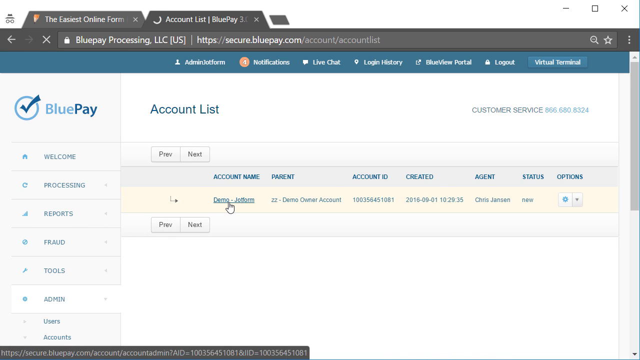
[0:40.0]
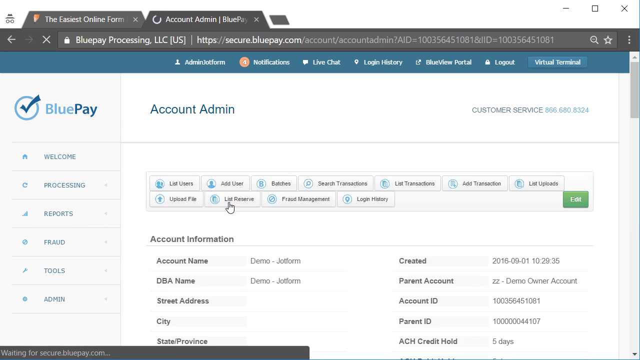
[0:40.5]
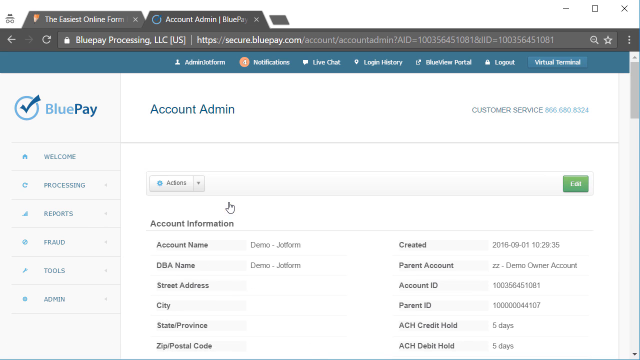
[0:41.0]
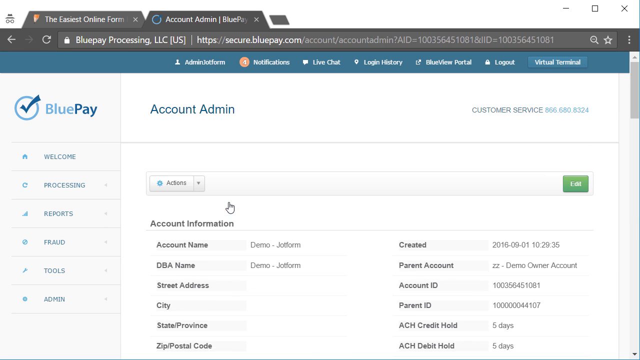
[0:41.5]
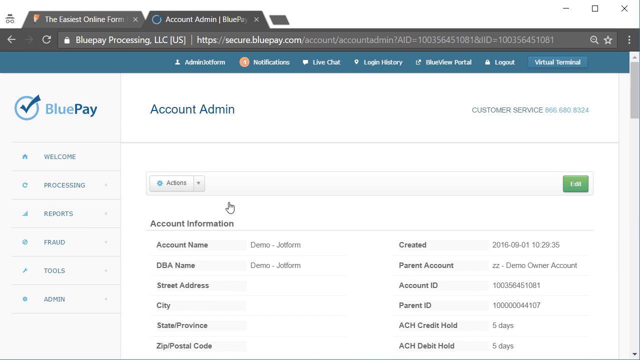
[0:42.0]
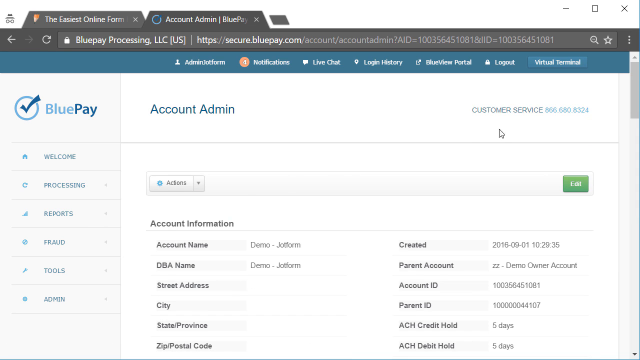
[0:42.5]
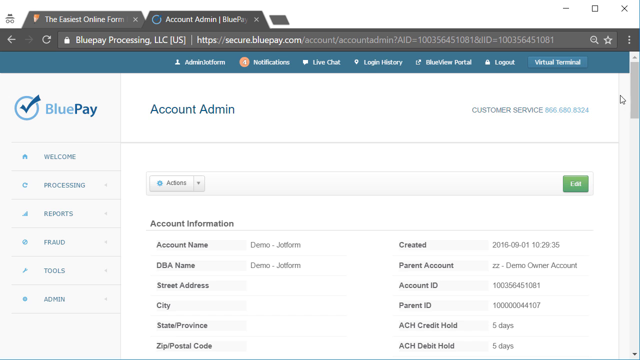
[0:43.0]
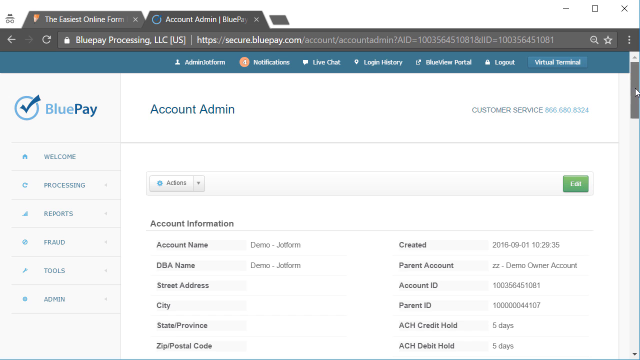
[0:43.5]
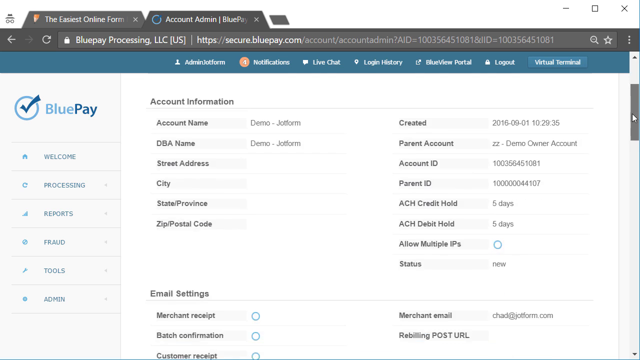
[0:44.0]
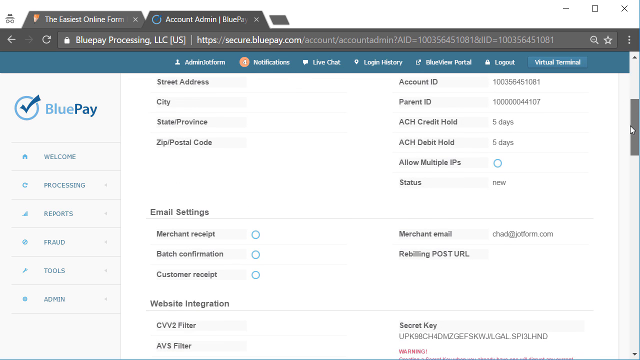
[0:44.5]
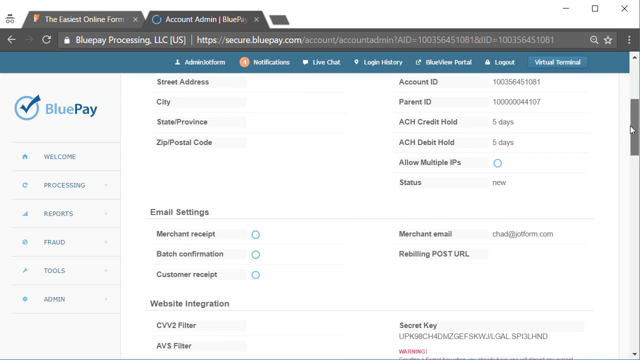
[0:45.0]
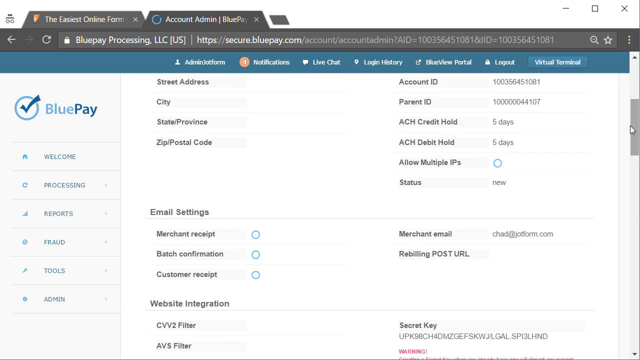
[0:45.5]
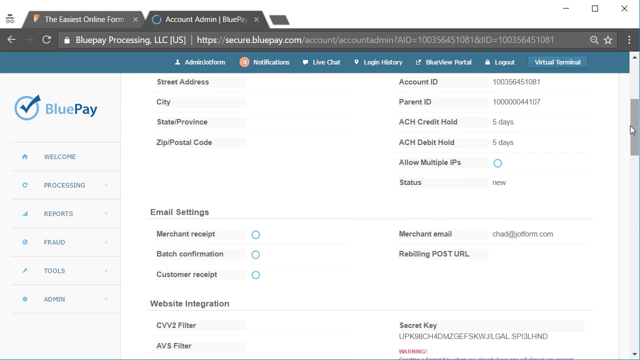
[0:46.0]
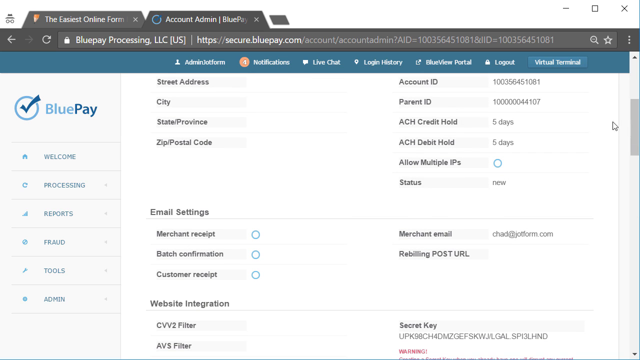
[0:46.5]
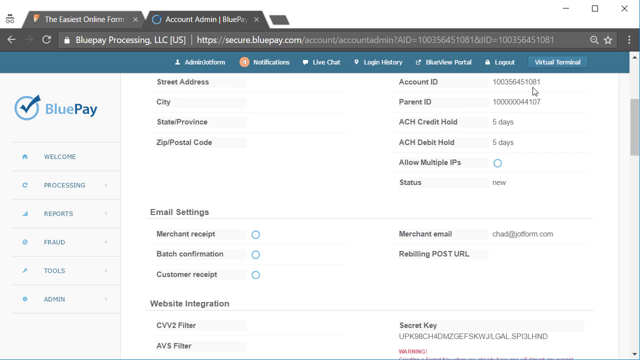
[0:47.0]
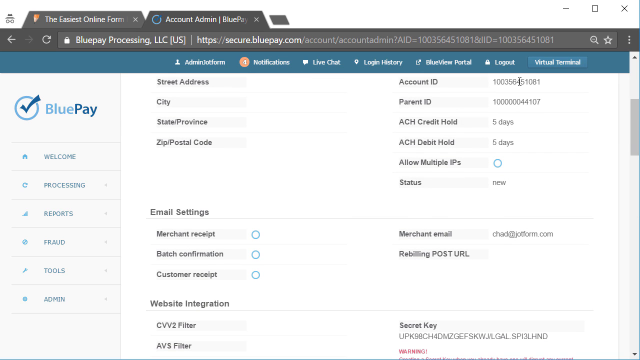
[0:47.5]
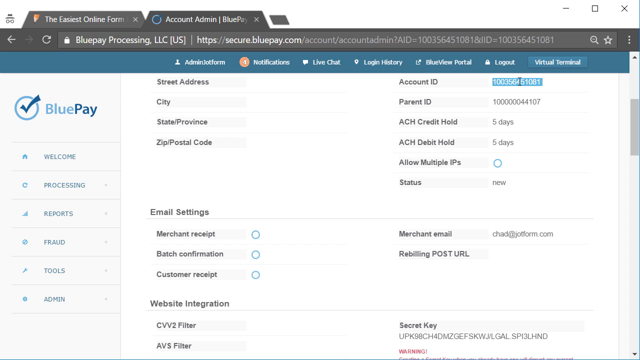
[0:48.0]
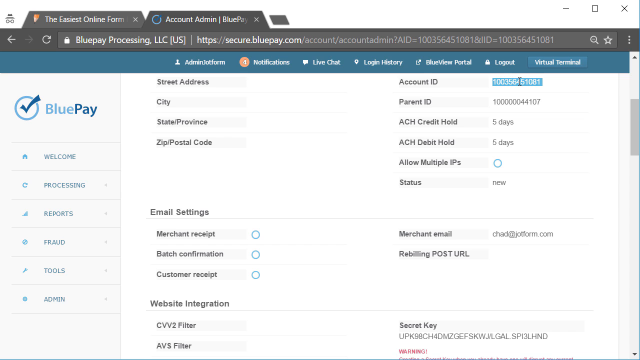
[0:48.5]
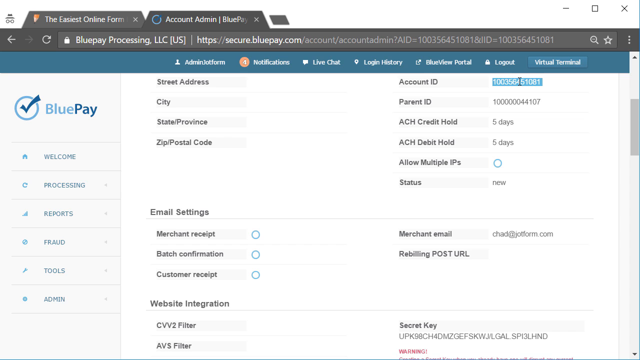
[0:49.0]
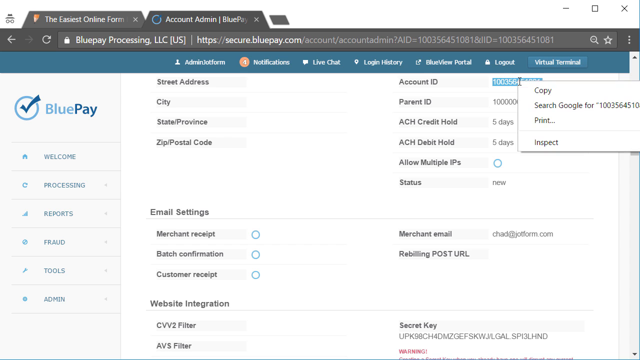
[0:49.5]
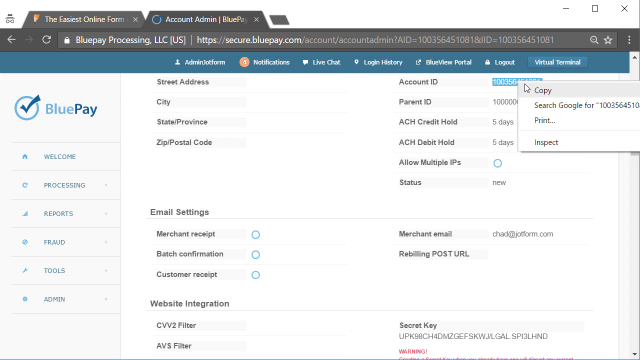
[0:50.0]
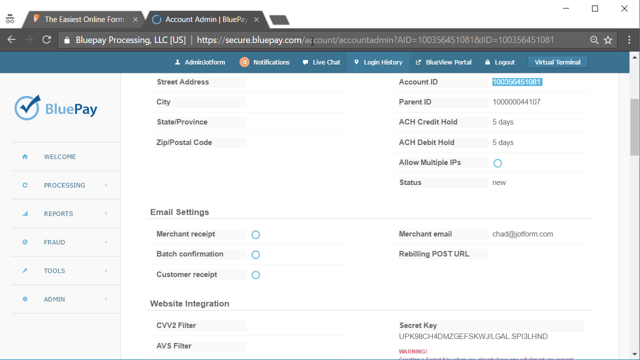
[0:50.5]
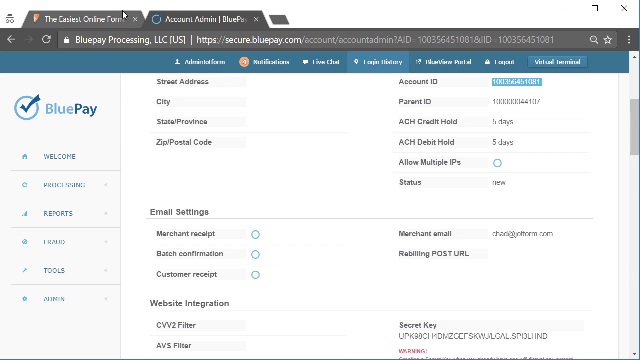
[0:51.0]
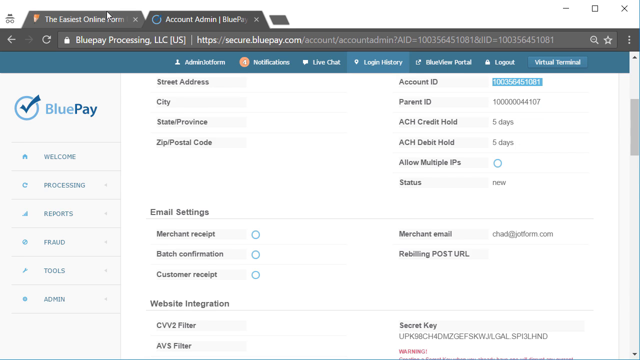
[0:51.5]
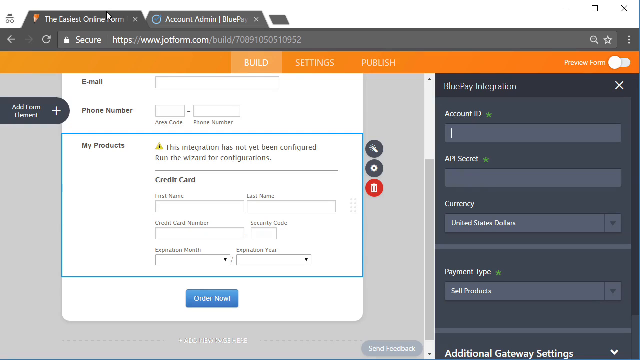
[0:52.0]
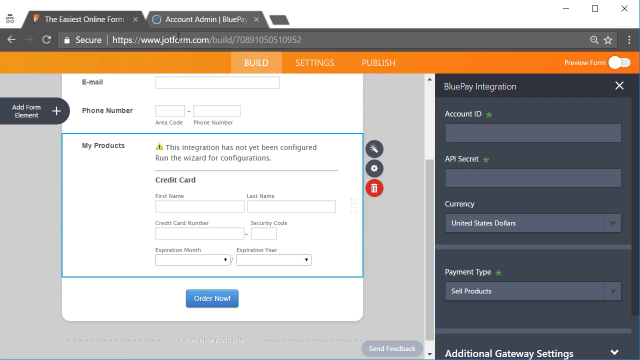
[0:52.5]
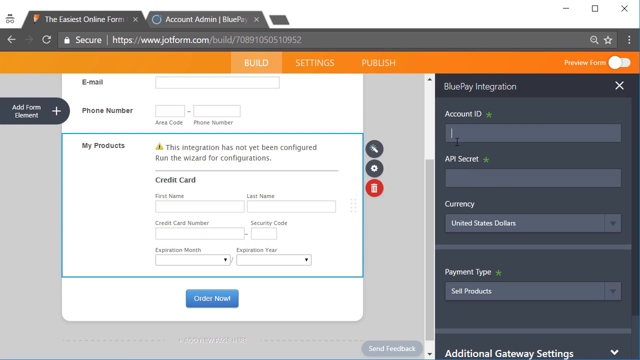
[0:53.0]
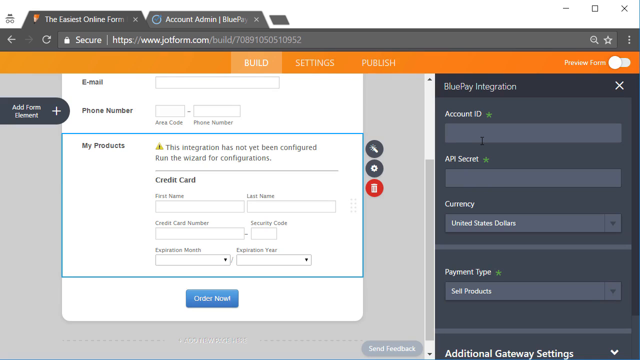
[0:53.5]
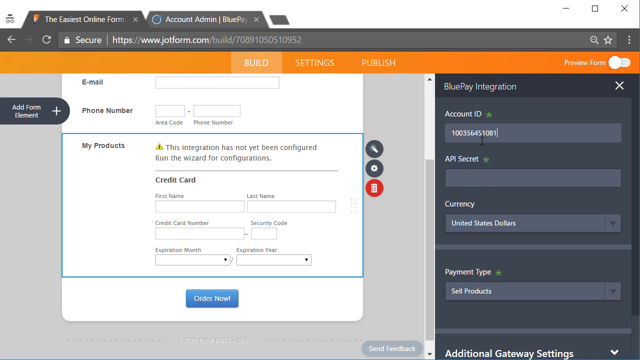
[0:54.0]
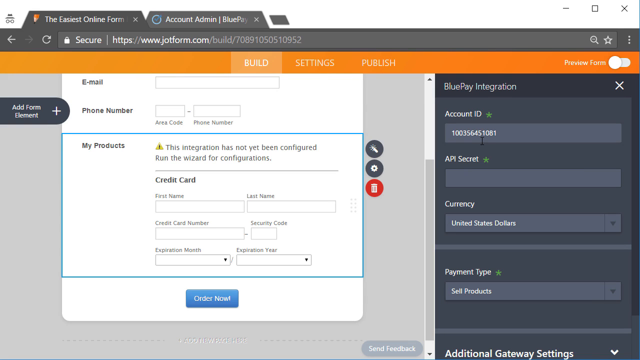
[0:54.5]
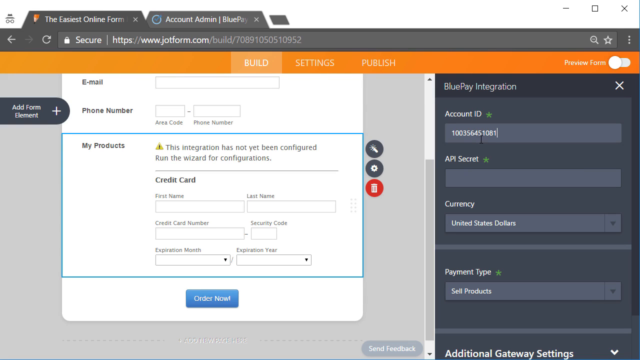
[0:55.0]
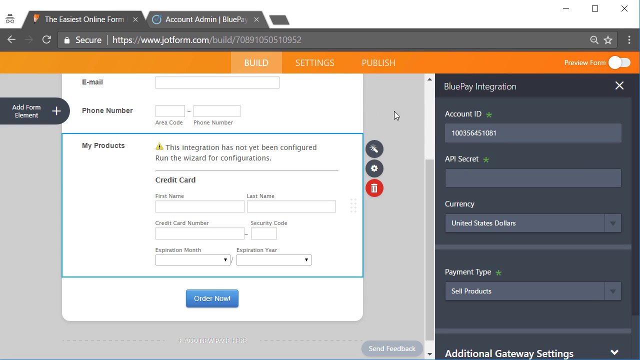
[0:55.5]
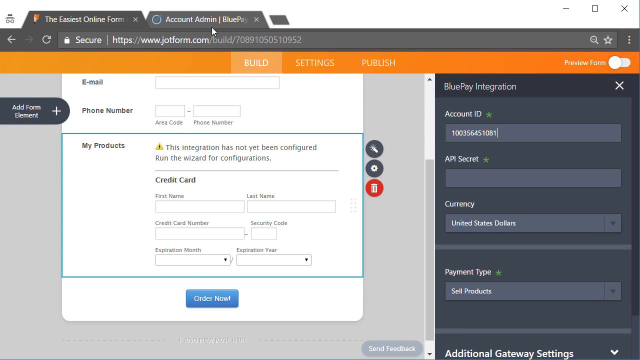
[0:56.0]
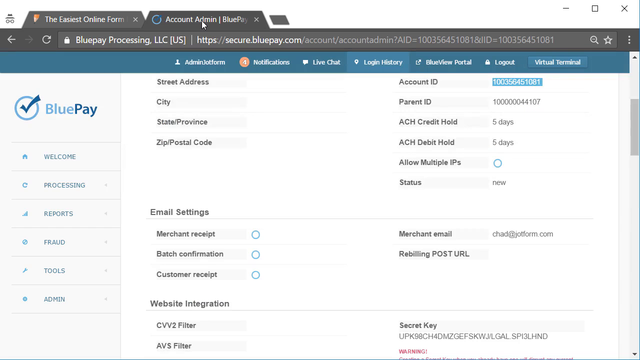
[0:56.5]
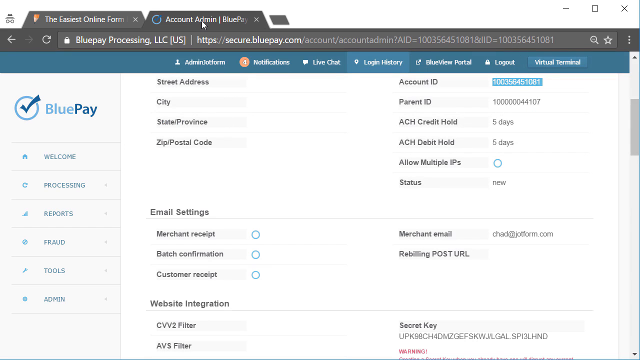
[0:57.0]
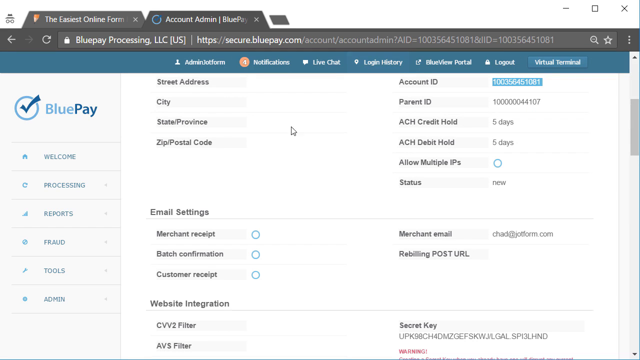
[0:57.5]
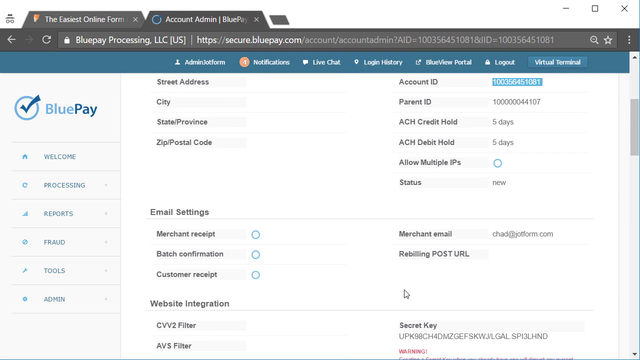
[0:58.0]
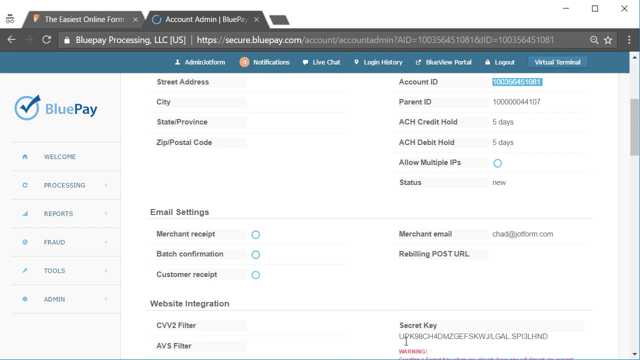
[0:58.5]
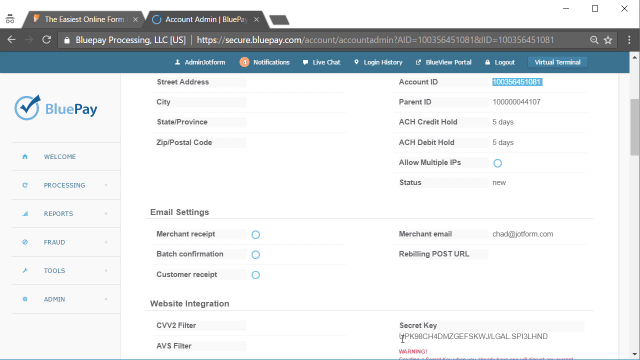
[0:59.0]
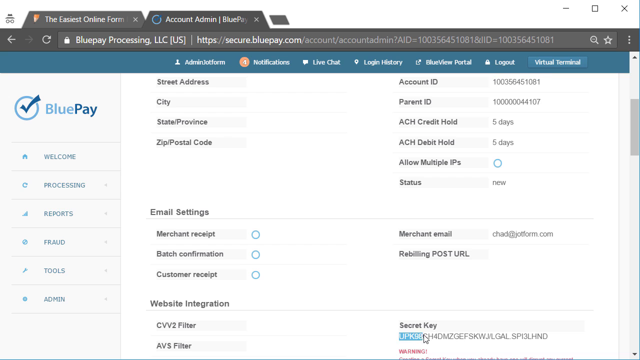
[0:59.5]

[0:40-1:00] On the BluePay website in the browser, the mouse hovers over DemoJotForm, which is in blue and underlined, suggesting it might be a clickable link. The user clicks it, and a new window opens with account information: account name, DBA name, created date, parent account, account ID and parent ID. The user scrolls down the page, highlights the account ID and right-clicks it to copy it. The mouse returns to the first tab in the browser, the JotForm website with the form build, and goes over to the BluePay wizard on the right-hand side of the screen. The user clicks the text box under Account ID and pastes the copied information. The mouse then moves back up to the BluePay tab and selects it, switching the view to the BluePay website.